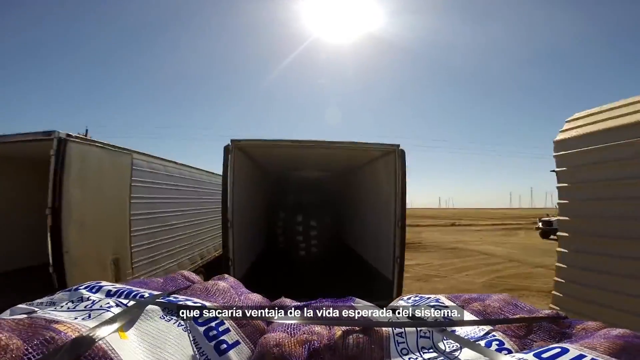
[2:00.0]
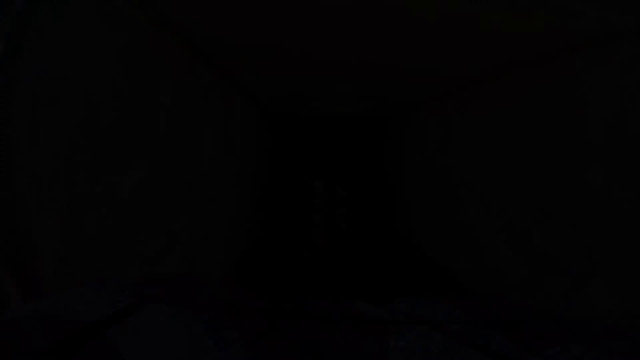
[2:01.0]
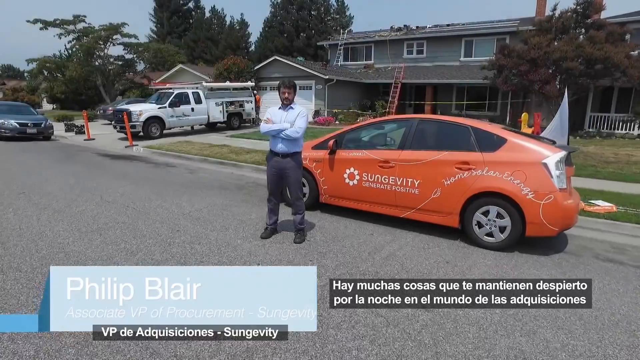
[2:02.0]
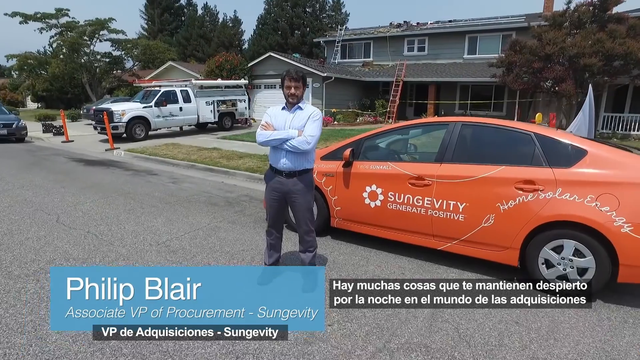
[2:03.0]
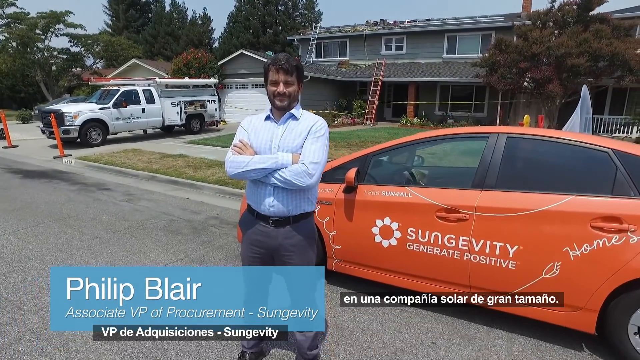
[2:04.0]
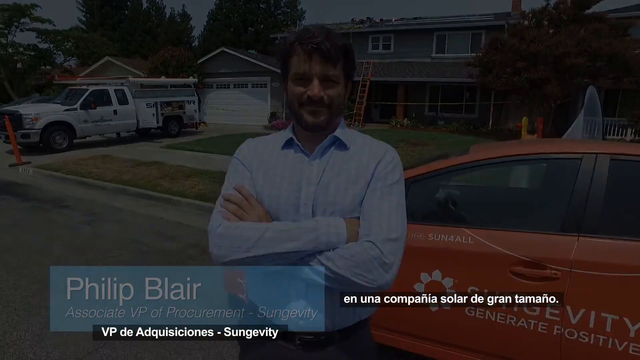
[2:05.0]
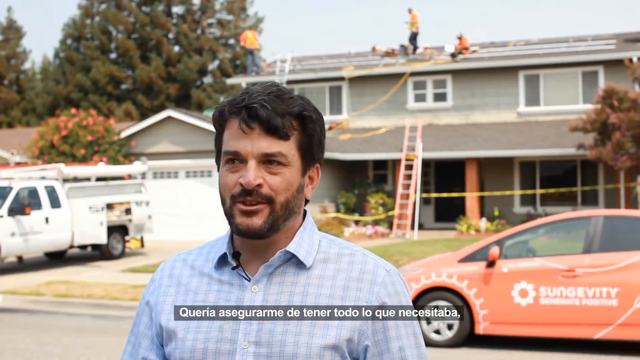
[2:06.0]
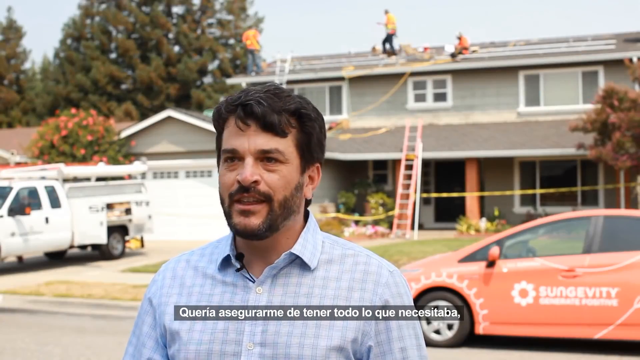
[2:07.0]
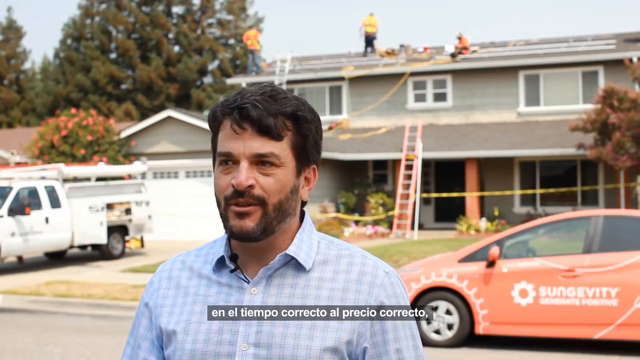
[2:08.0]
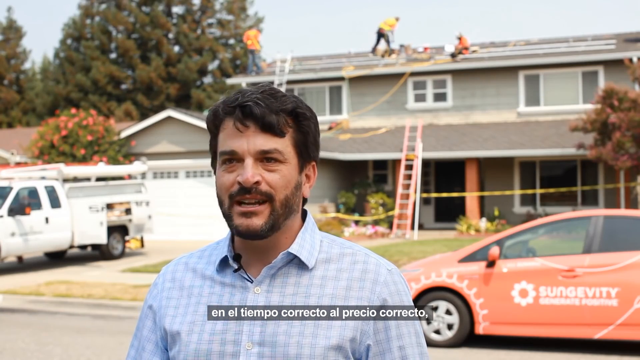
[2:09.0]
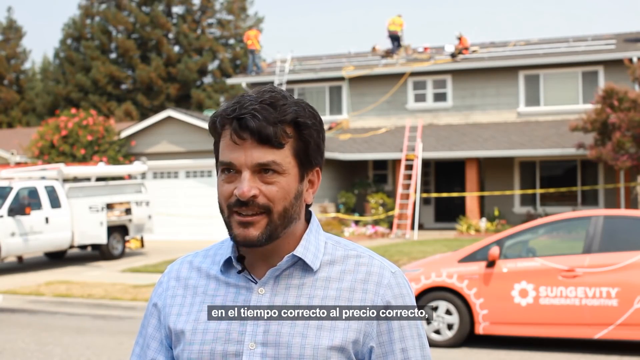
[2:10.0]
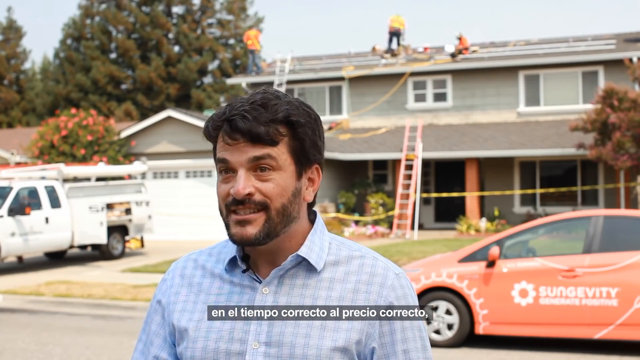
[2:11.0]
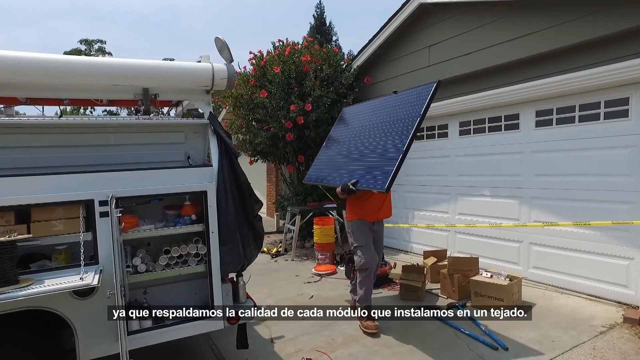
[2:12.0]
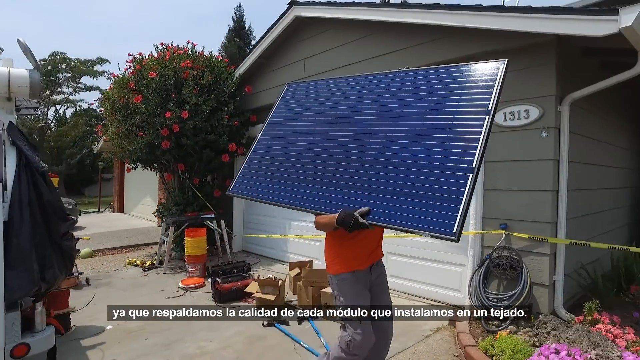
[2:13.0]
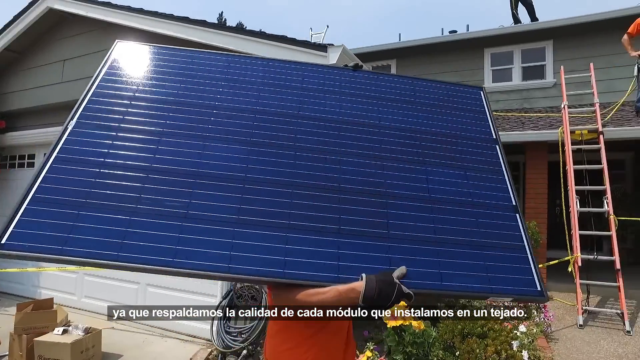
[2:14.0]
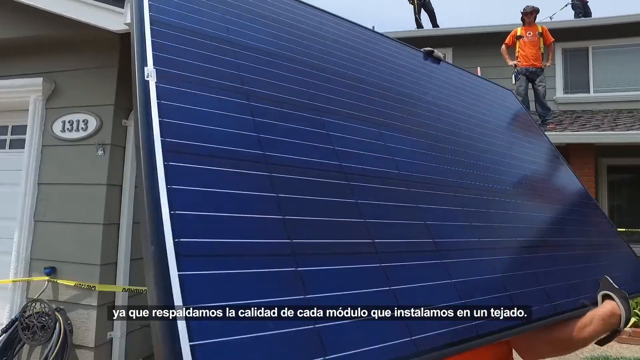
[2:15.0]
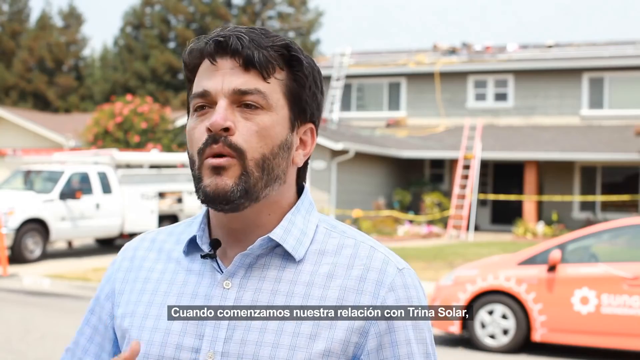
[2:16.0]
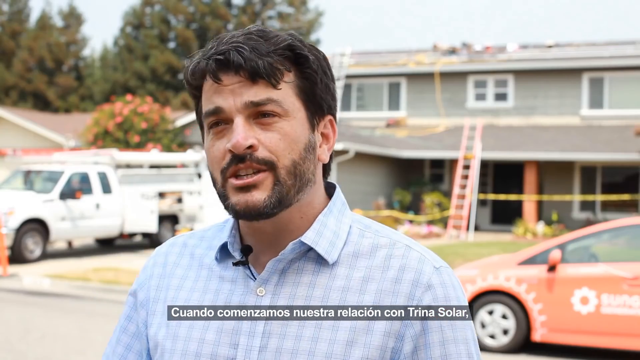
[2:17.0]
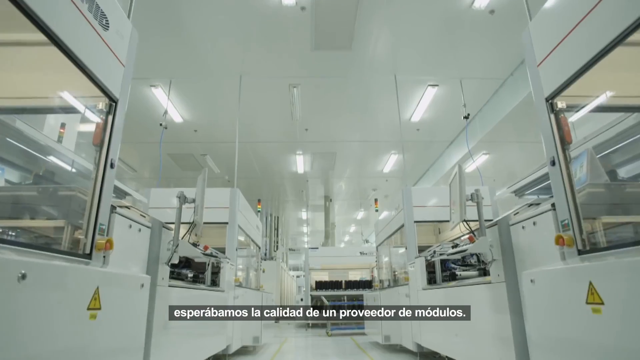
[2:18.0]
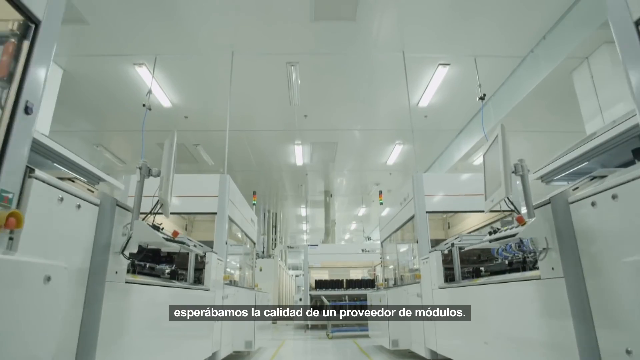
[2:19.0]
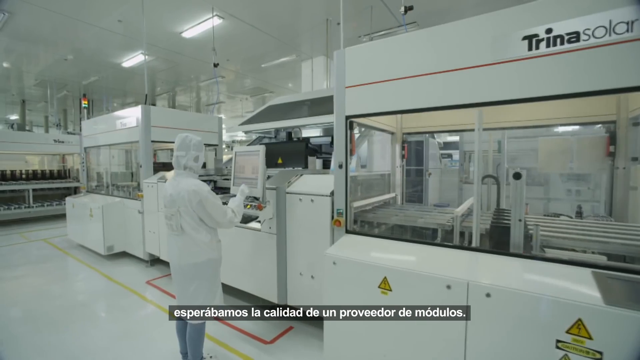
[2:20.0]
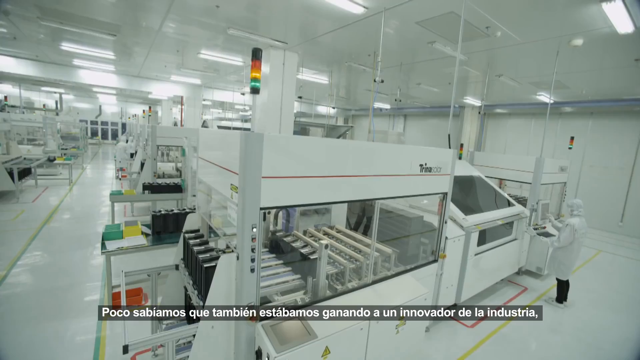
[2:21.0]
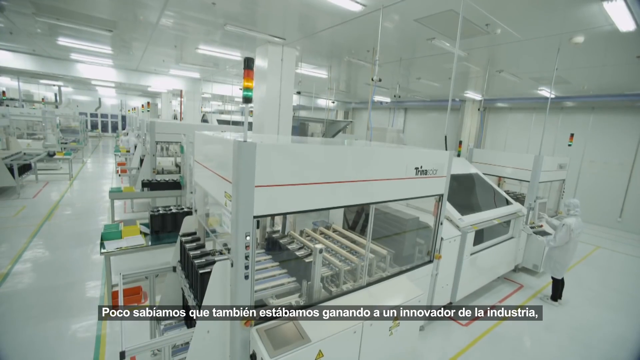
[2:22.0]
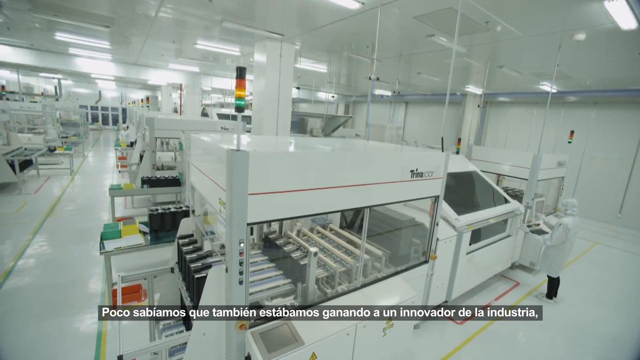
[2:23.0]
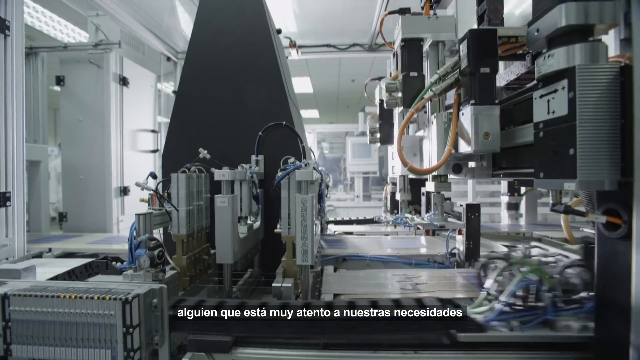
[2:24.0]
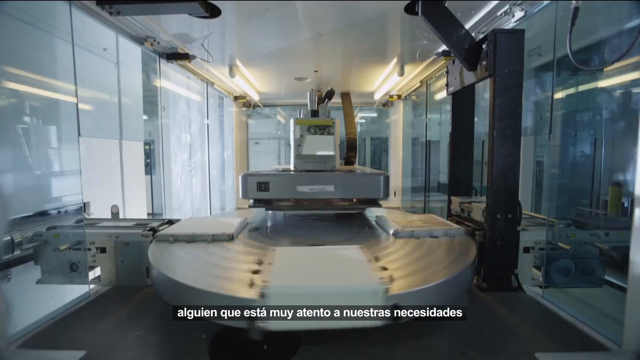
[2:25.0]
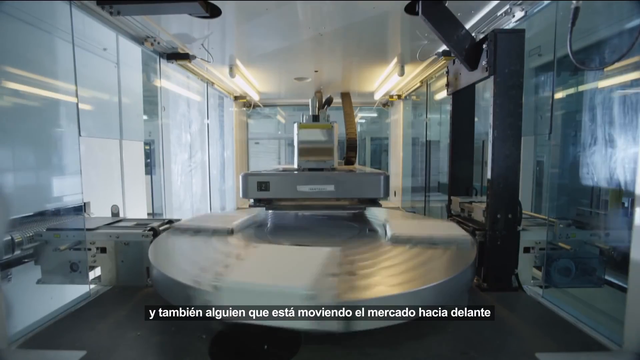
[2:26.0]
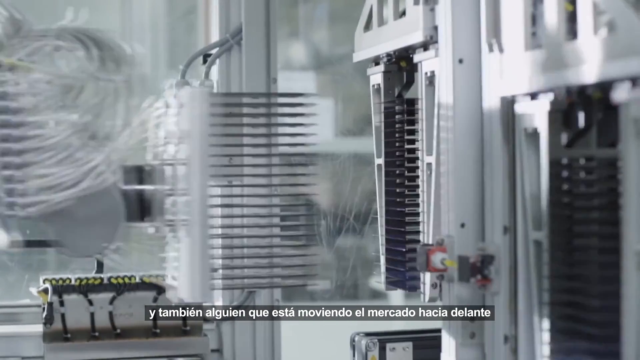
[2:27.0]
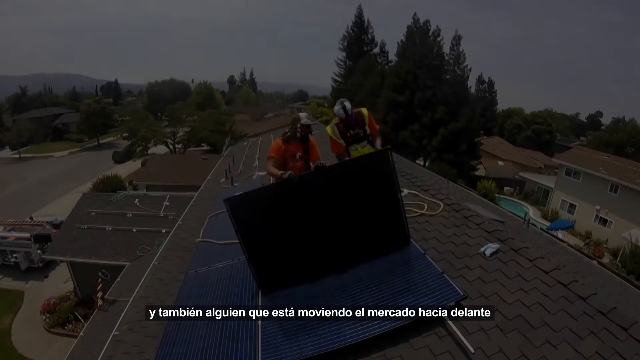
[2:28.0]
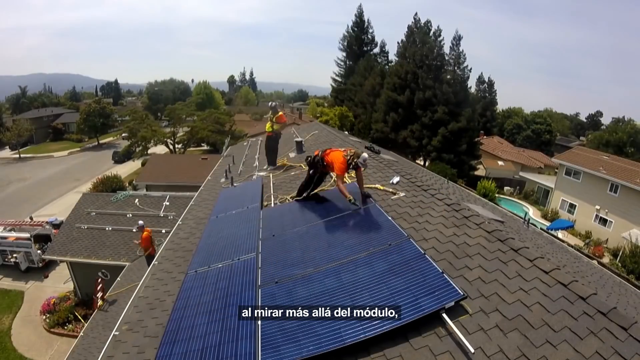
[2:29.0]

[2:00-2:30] Something goes inside a truck, then the video cuts to the camera zooming in on a man identified as "Philip Blair, associate VP of equipment, Sungevity." The camera zooms in on him wearing a dress shirt, pants, and a belt. He stands in front of an orange car that looks like a Prius, which says "Sungevity" and "Generate." Behind it is a house that looks to have work being done, with a ladder leading up to the top window. Another angle shows him speaking to the camera; his shirt is checkered. A truck is in front of the garage of the house, and three people walk on the roof, working, while he speaks. The video then cuts to a person holding a solar panel, walking across the house.